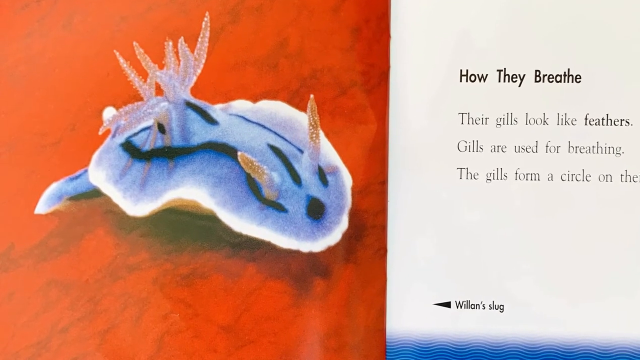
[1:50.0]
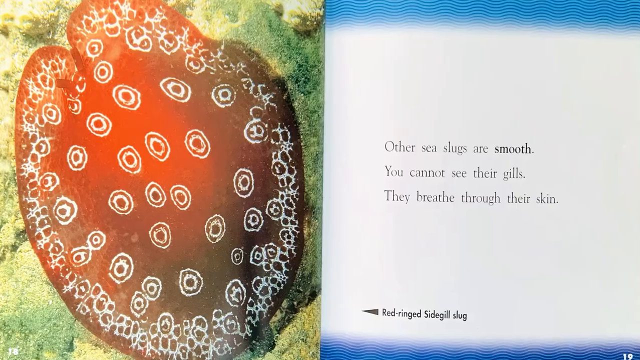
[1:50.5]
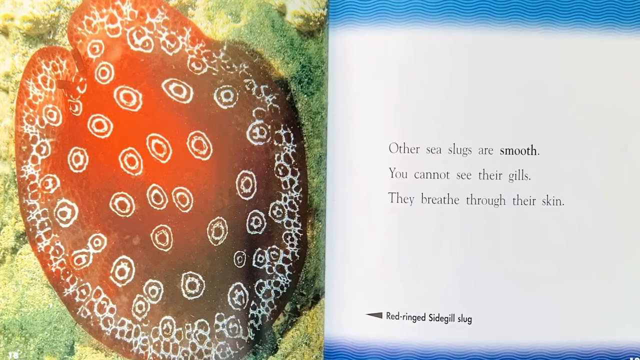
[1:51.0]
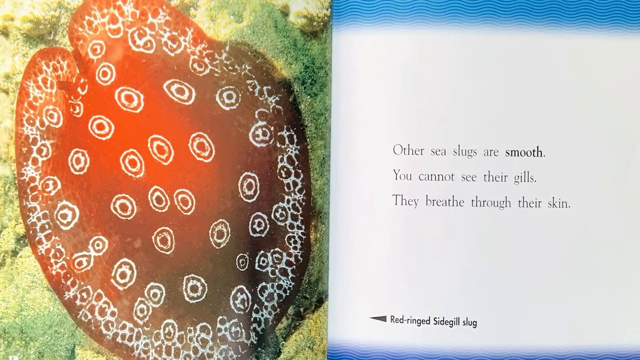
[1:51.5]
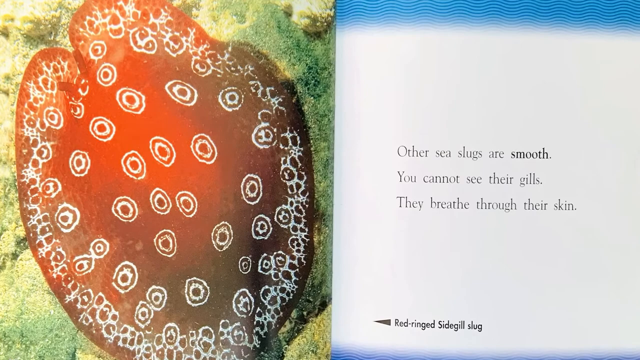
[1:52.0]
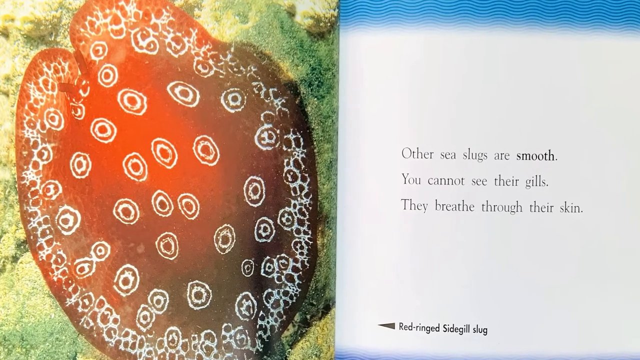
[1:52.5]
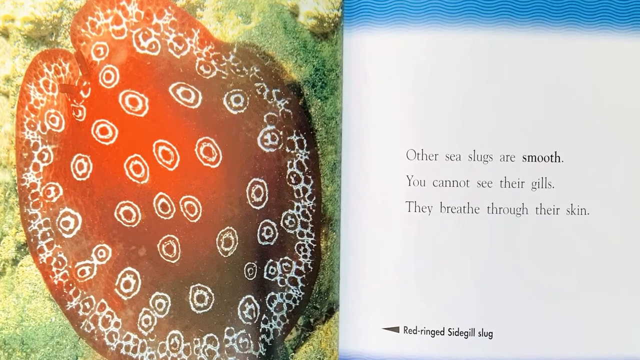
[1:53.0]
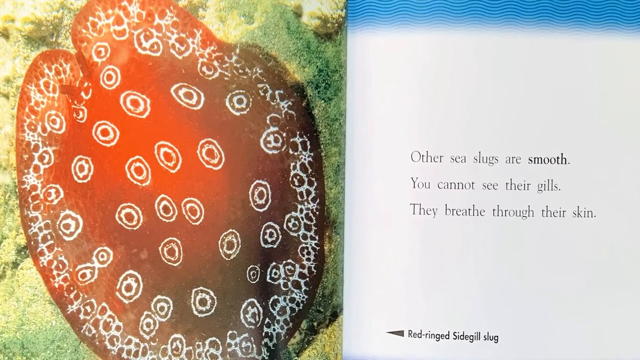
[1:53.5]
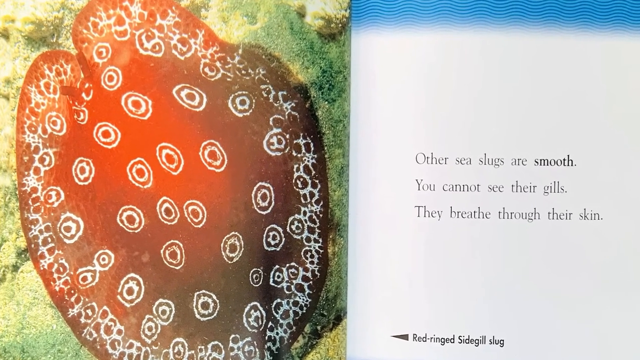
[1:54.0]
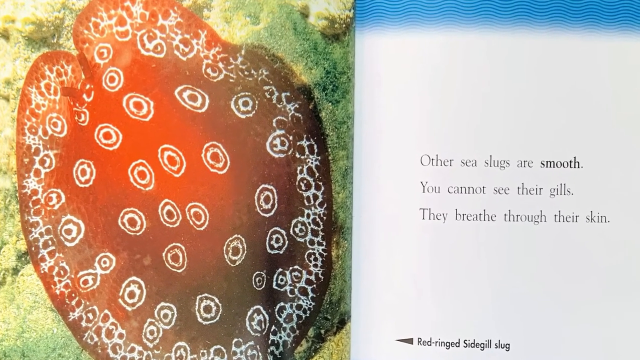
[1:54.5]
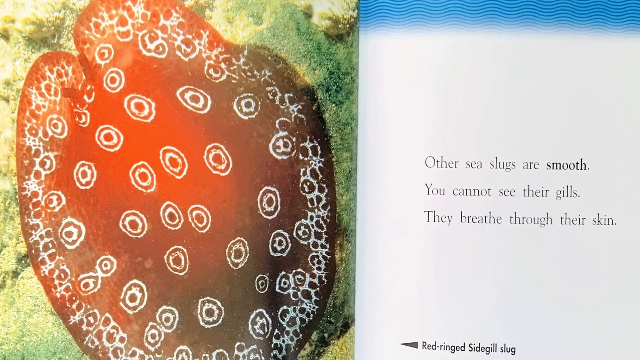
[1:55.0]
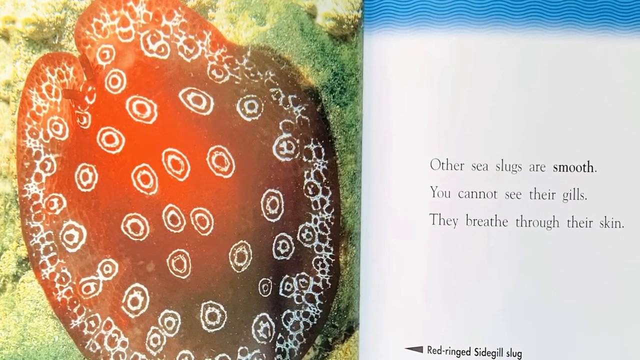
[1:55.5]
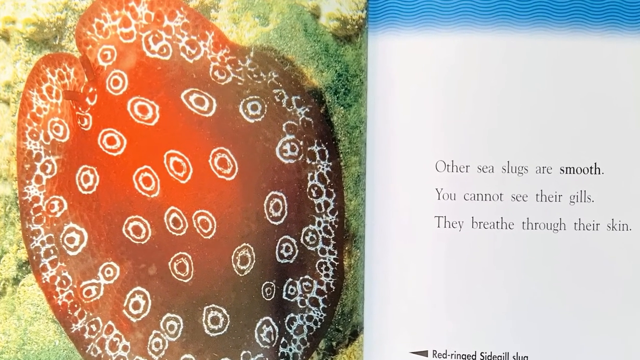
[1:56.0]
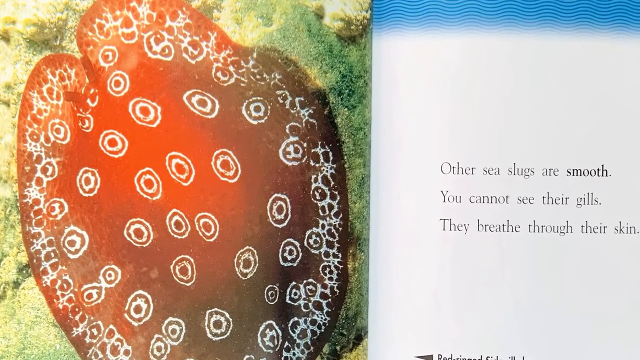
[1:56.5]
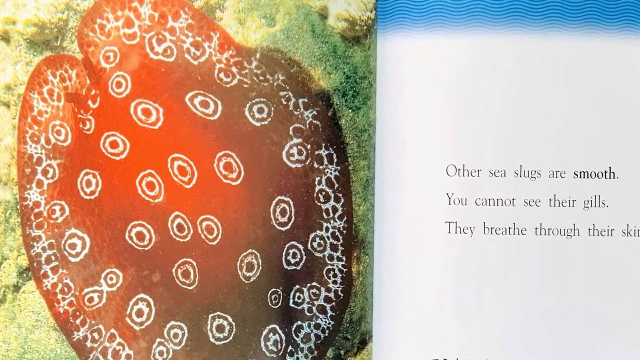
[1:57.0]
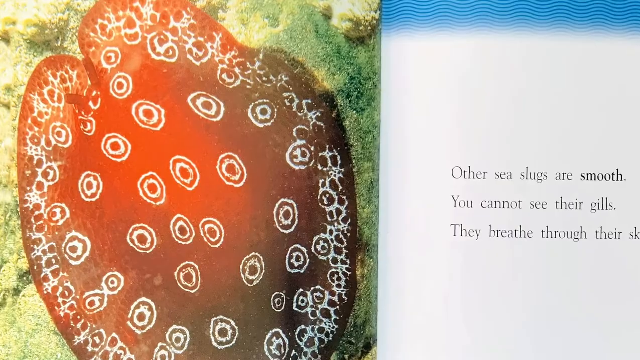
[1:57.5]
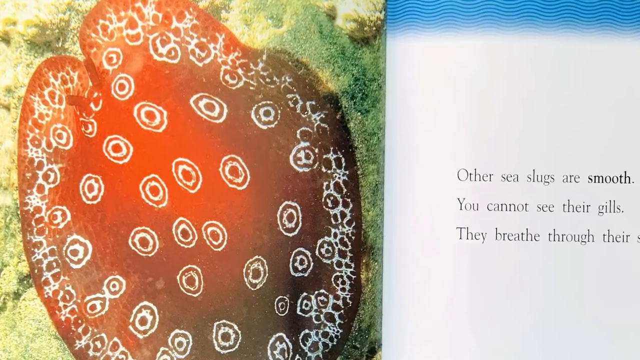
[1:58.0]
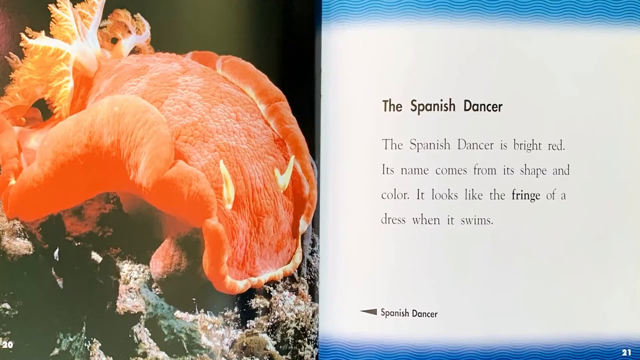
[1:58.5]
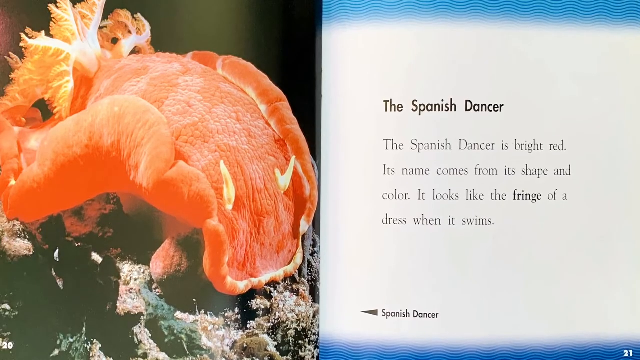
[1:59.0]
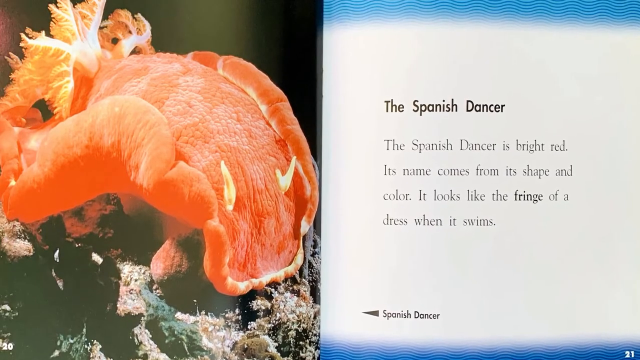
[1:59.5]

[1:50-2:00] A side-by-side spread shows, on the right, a white book page with a bold black label at the top reading "how they breathe." Beneath it, the text reads "their gills look like feathers. Gills are used for breathing. The gills form a circle," and then the text cuts off. At the bottom left of the screen, a black arrowhead points to the left, next to the label "Willan's Slug." On the left is a close-up image of a light blue, rectangular, flat slug with white around its outer edges, thick black wavy lines down its back, thick gold antennae coming out of its head, and transparent tentacle-like tails coming out of its lower back. It sits on some type of red surface. The screen changes to another spread. On the white page on the right, text in the middle reads "Other sea slugs are smooth. You cannot see their gills. They breathe through their skin." At the bottom left of the page, a black arrowhead points to the left, next to the label "Red ringed sidegill slug." On the left is an image of a large, round, brown, flat slug with outlines of small white circles covering its back; it looks like there is an outline of a white circle with a larger white circle outline around it. It is laying on some type of yellow coral and looks very flat, like a pancake. The view zooms in closer on the image on the left.